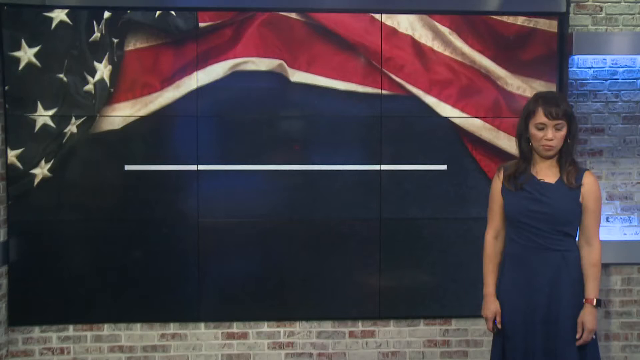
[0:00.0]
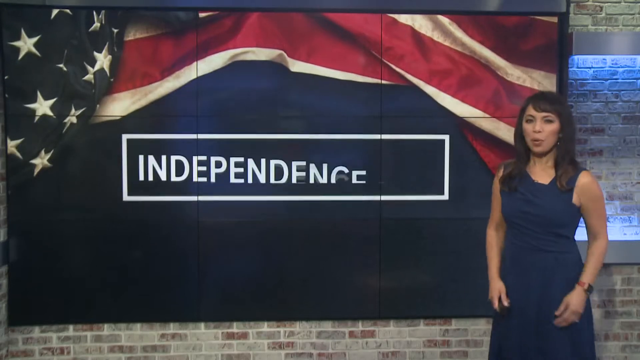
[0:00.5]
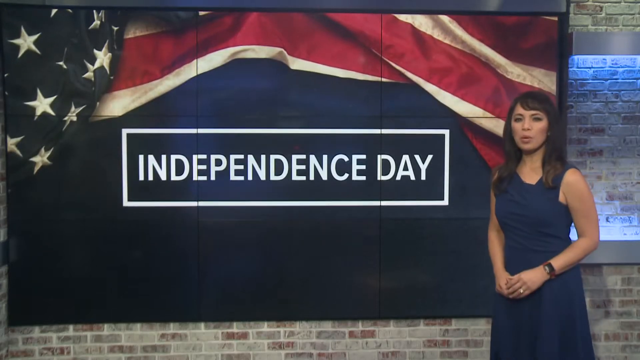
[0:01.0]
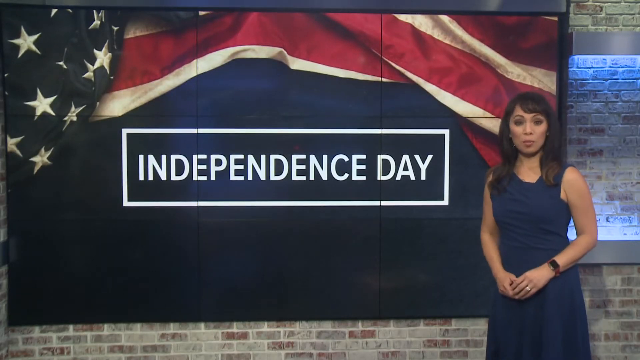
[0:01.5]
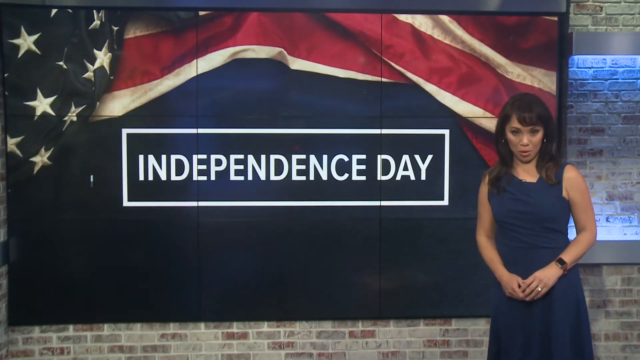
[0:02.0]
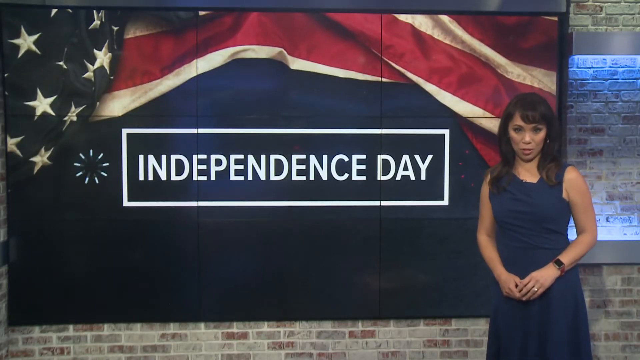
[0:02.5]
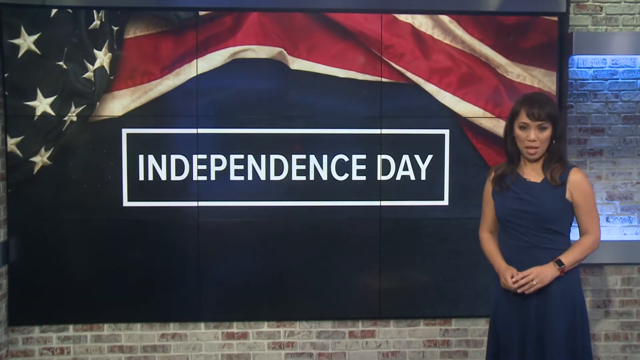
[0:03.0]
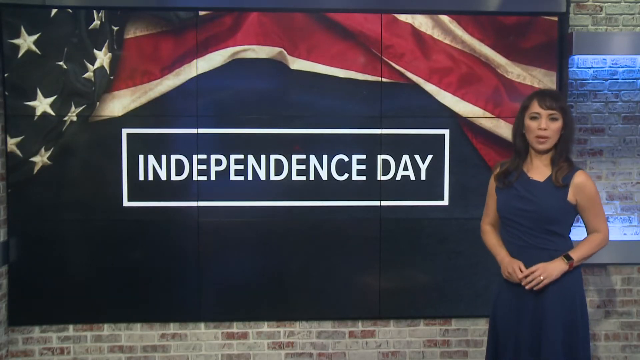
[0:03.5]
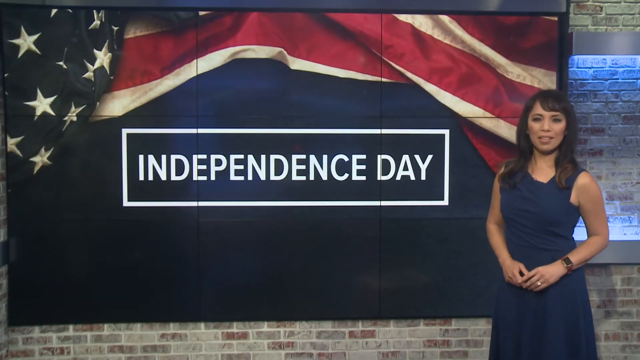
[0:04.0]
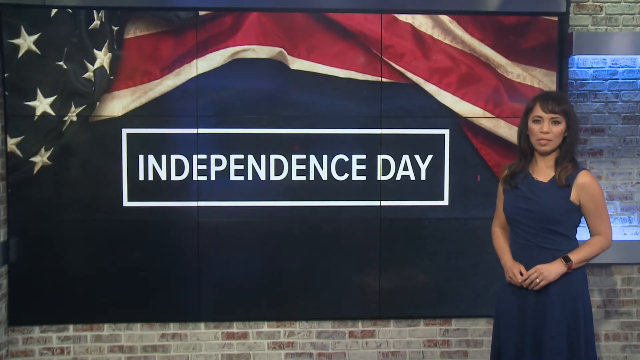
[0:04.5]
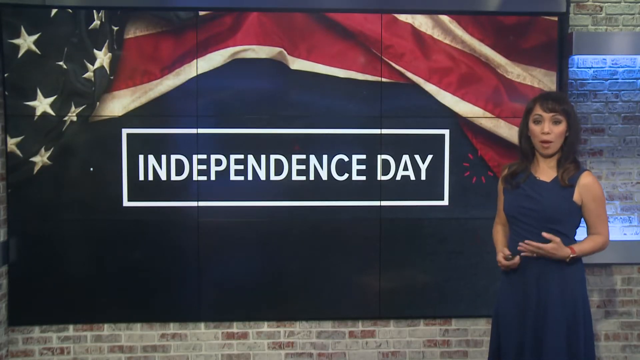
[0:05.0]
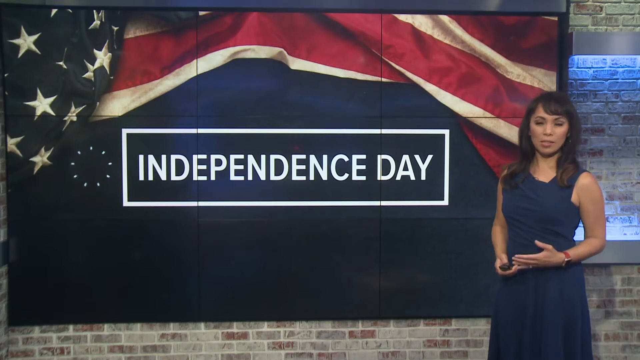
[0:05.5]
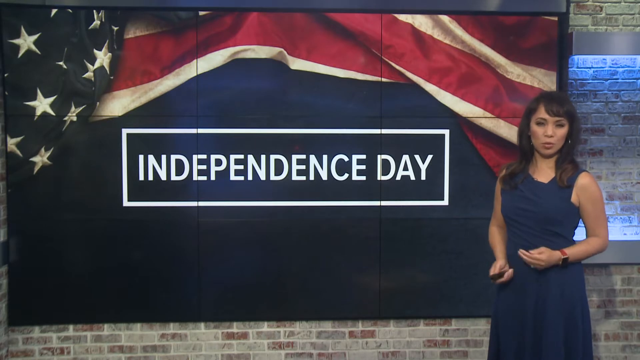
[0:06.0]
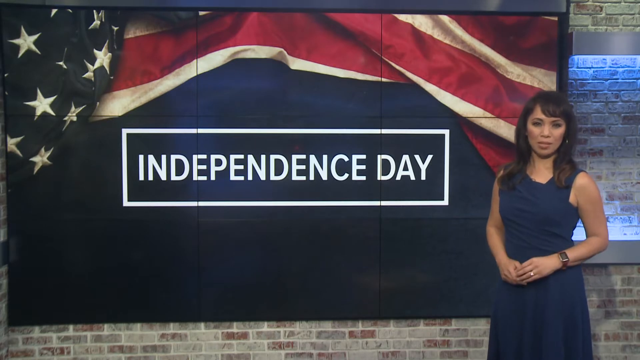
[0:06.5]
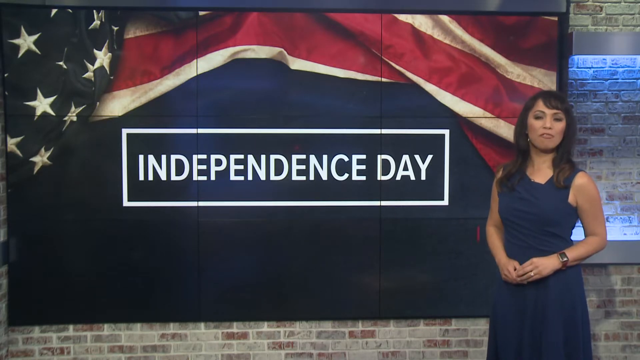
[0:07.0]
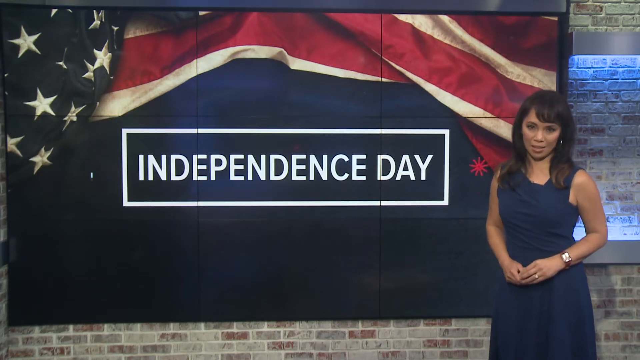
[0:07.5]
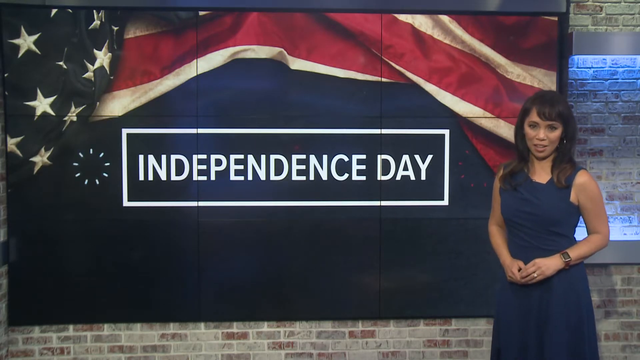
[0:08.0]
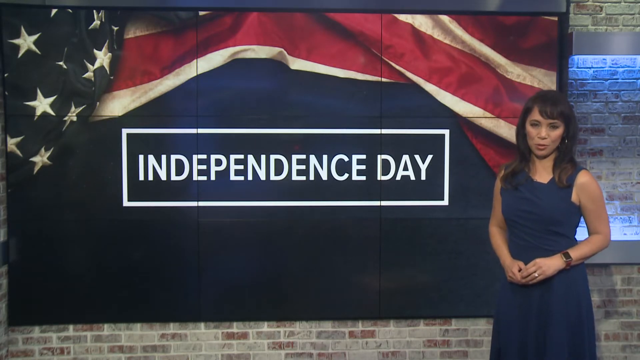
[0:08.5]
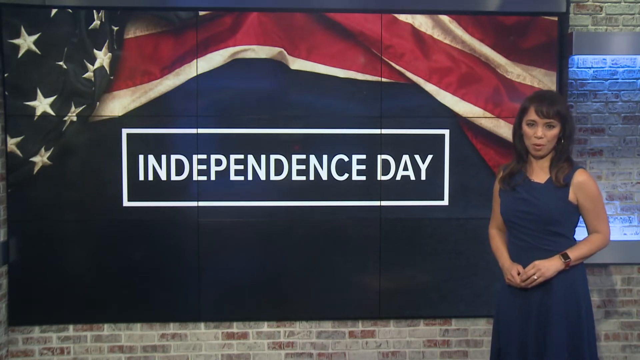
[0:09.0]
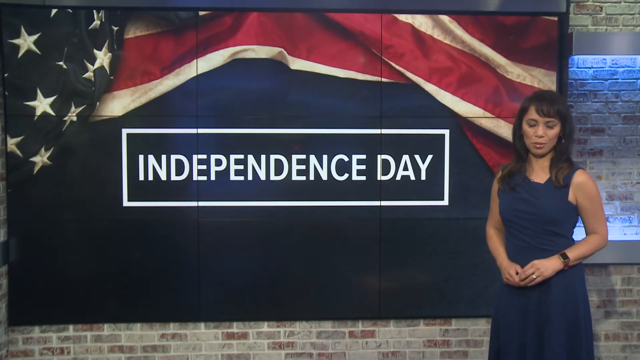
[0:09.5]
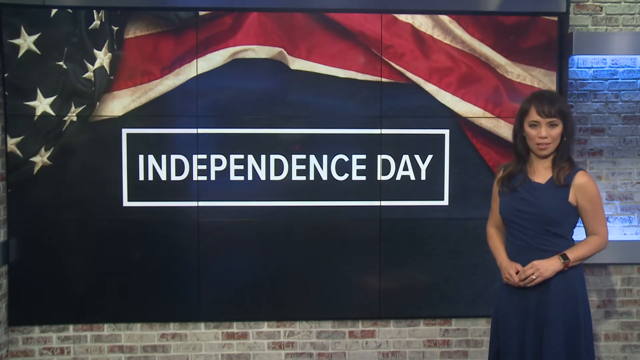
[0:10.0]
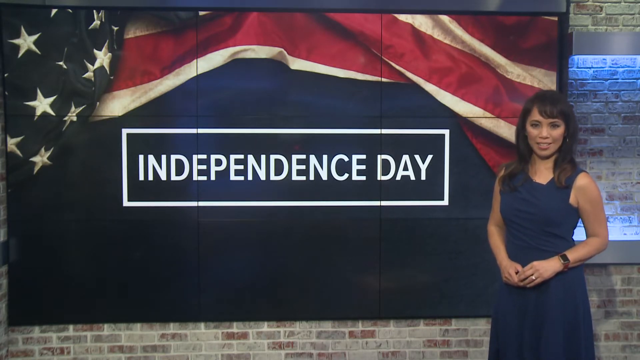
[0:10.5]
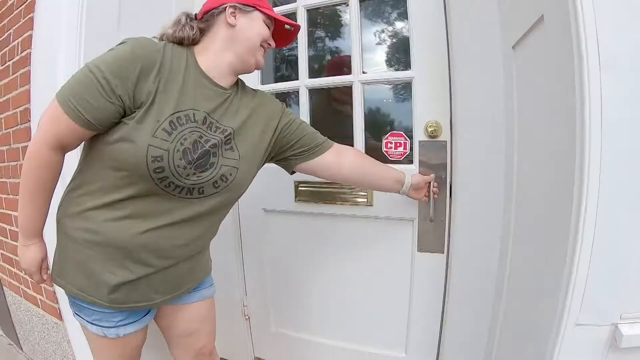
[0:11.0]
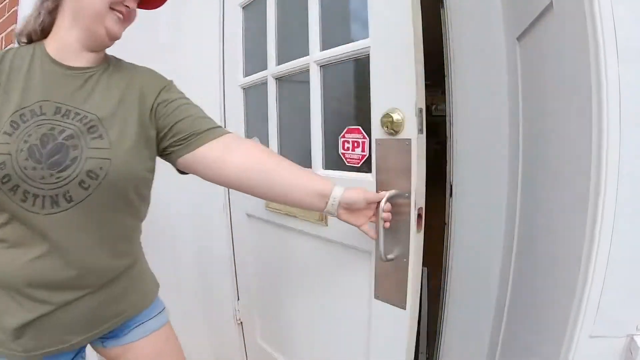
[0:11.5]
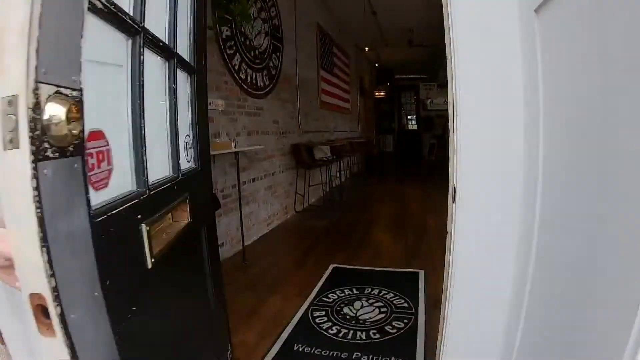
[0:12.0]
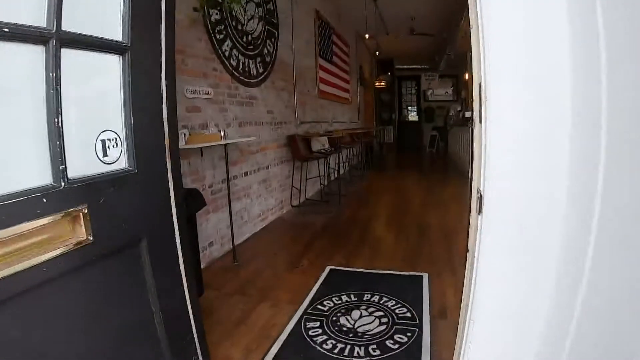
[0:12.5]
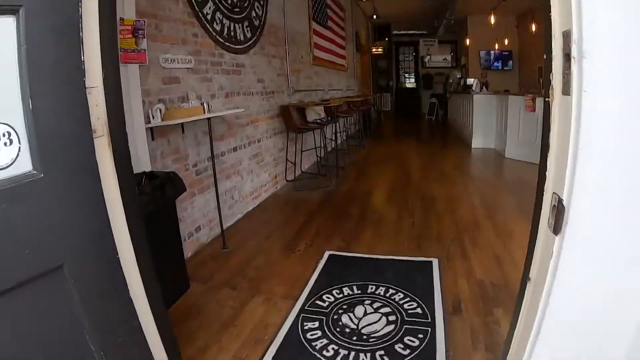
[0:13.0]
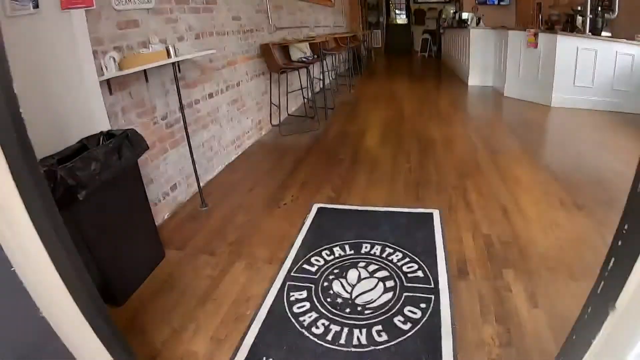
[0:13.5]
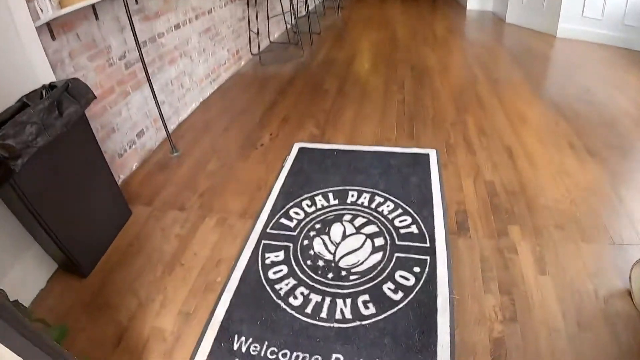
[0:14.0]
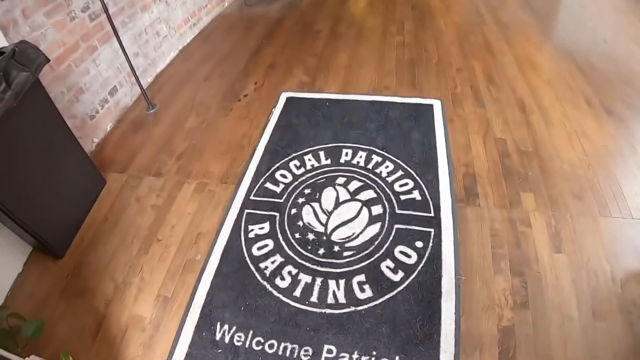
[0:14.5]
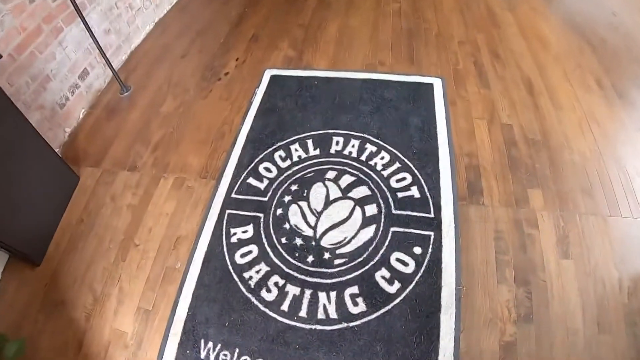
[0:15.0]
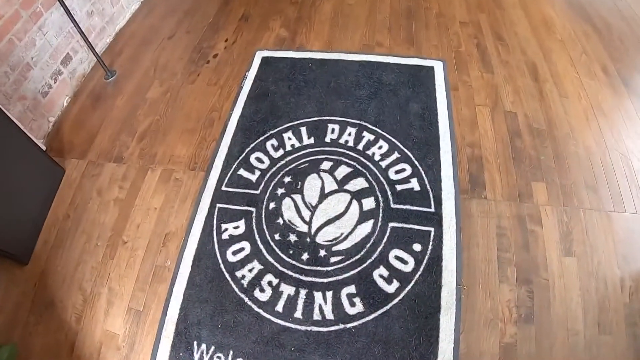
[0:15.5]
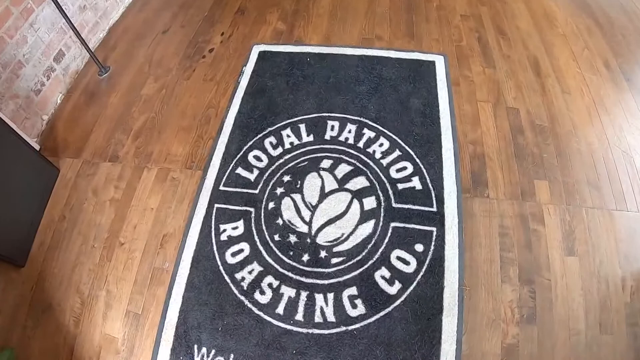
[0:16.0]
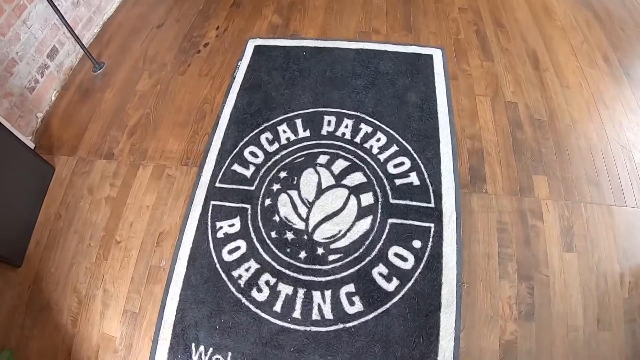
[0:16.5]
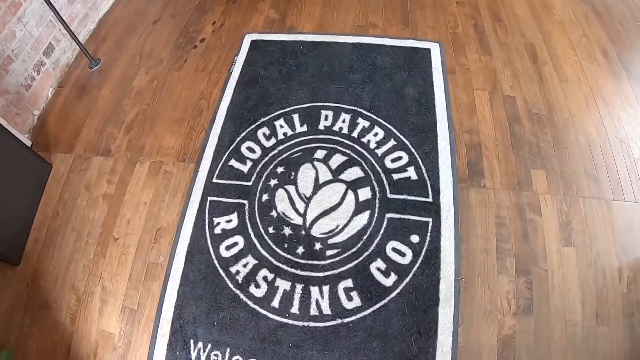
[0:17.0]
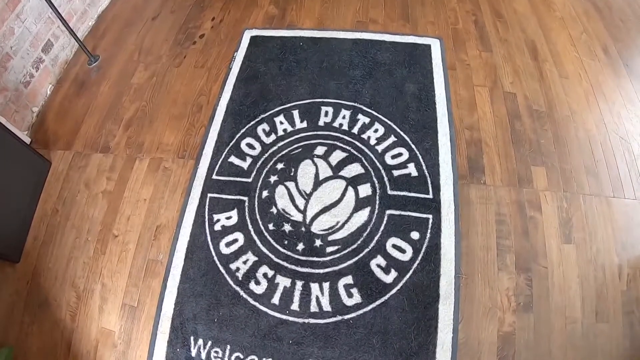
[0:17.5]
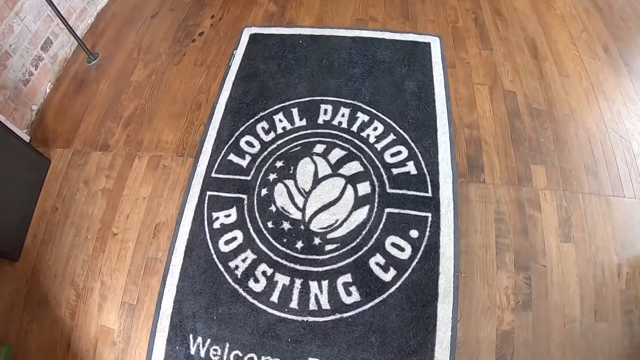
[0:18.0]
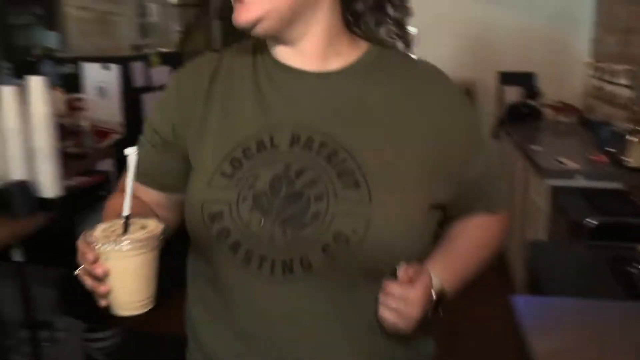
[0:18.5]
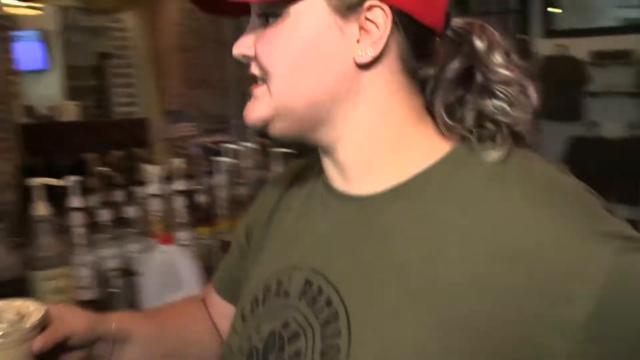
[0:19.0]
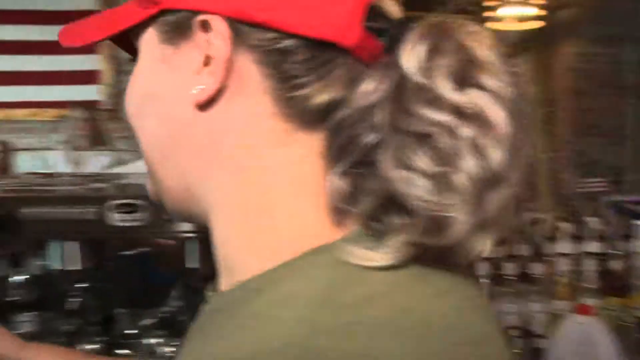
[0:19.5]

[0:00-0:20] A female news reporter in a dark navy blue dress appears first. Behind her is a screen showing an image of the American flag with the writing "Independence Day", and fireworks going off, so the segment is apparently about celebrating Independence Day. The scene then cuts to a coffee place called Local Patriotic Roasting Co., which has an American flag on the wall. A woman behind the till has an iced coffee and serves it to a customer.